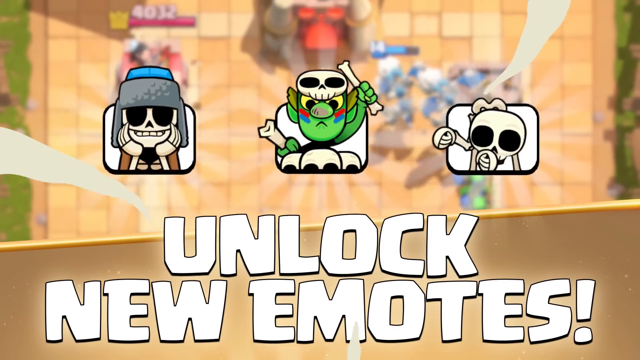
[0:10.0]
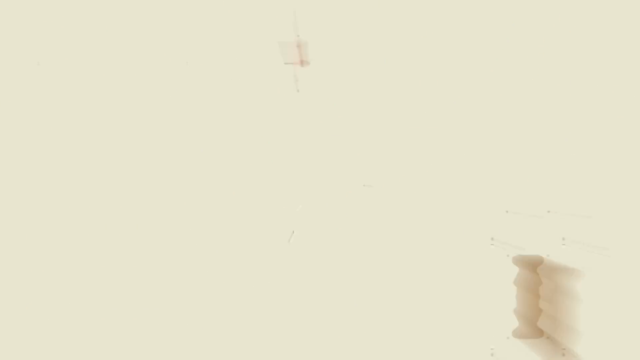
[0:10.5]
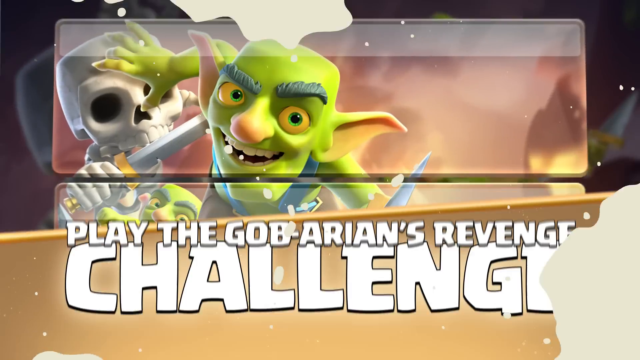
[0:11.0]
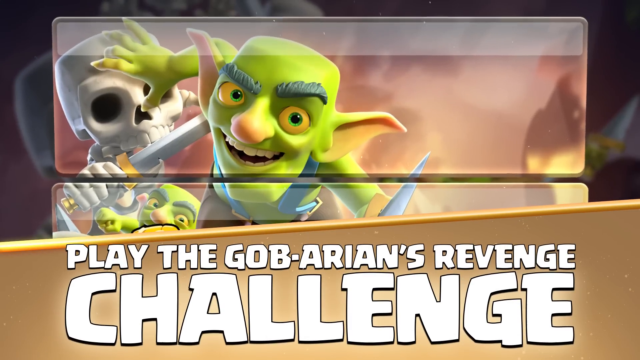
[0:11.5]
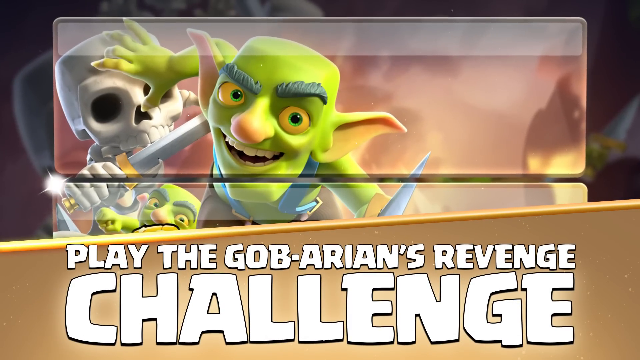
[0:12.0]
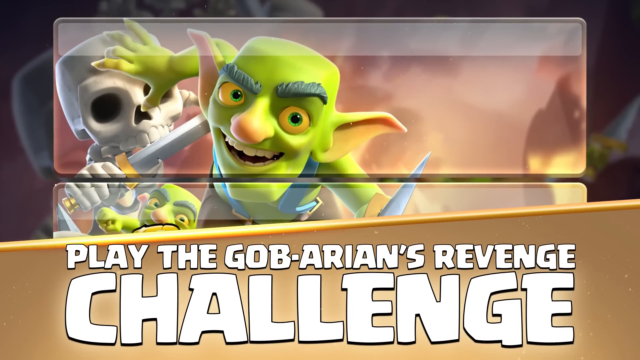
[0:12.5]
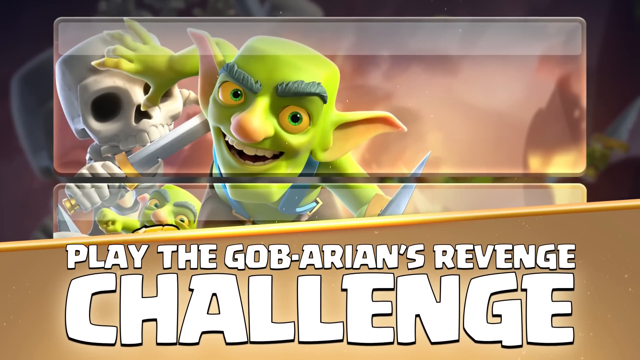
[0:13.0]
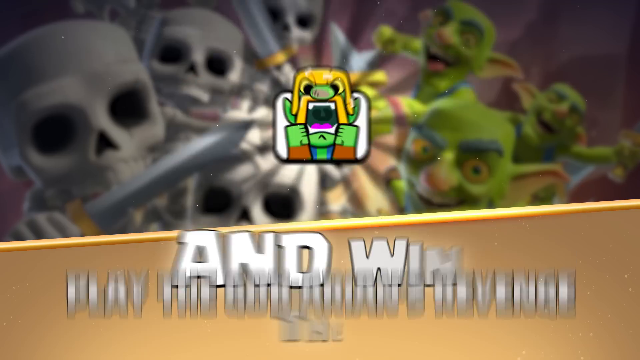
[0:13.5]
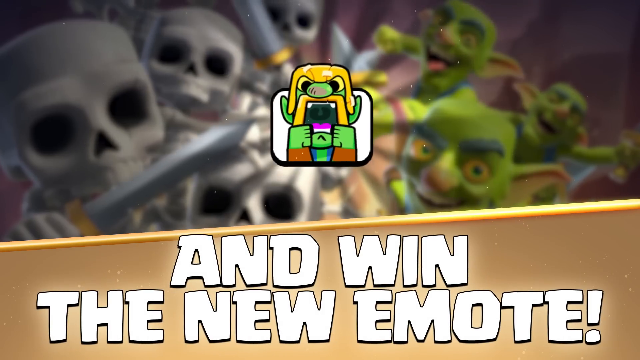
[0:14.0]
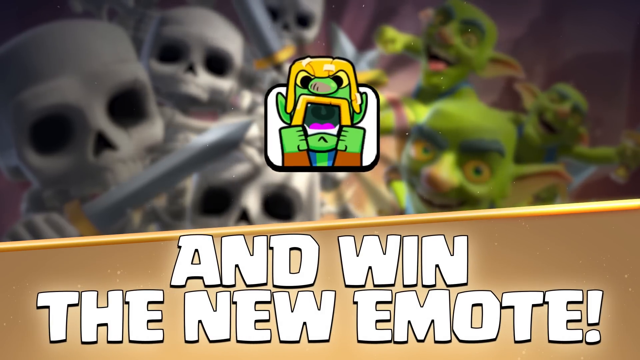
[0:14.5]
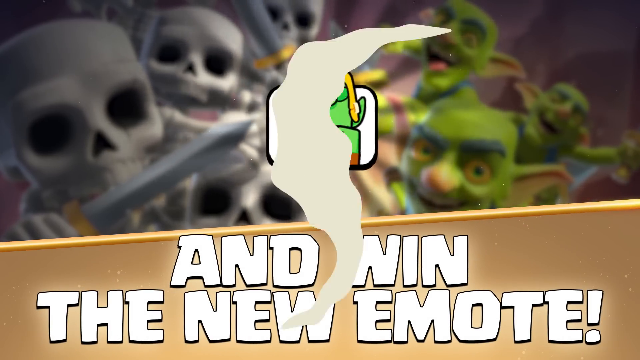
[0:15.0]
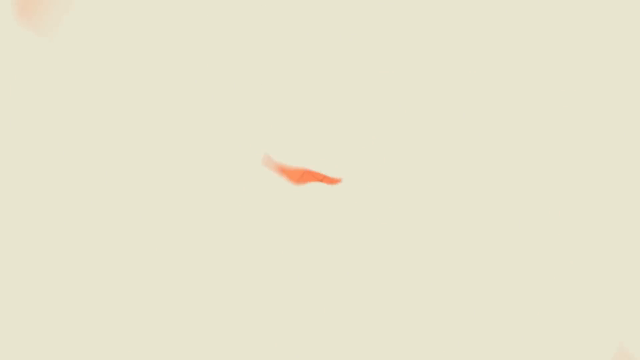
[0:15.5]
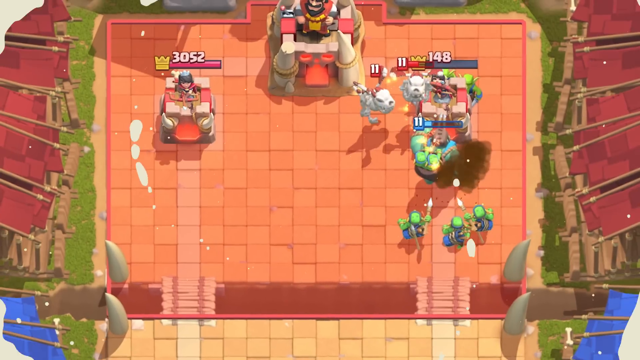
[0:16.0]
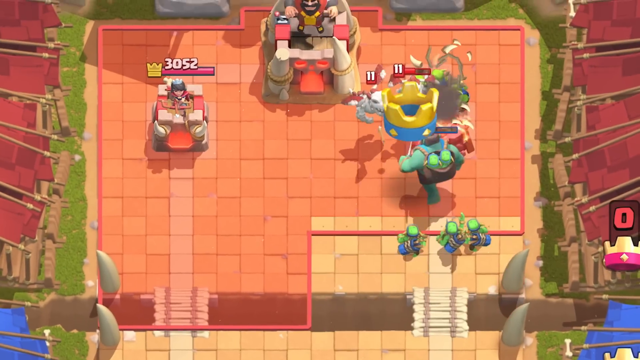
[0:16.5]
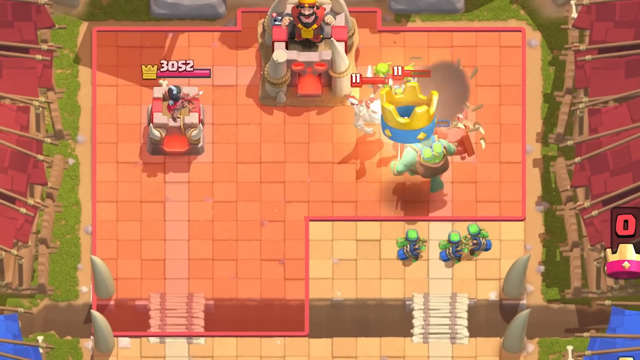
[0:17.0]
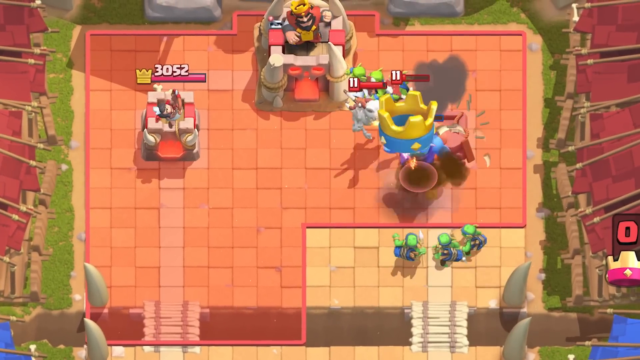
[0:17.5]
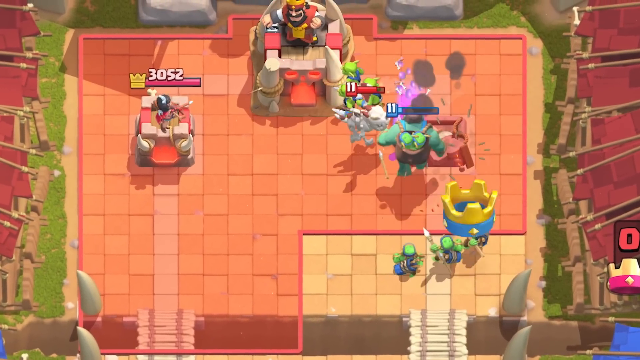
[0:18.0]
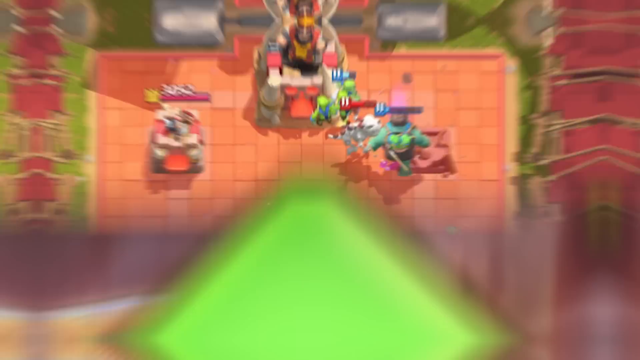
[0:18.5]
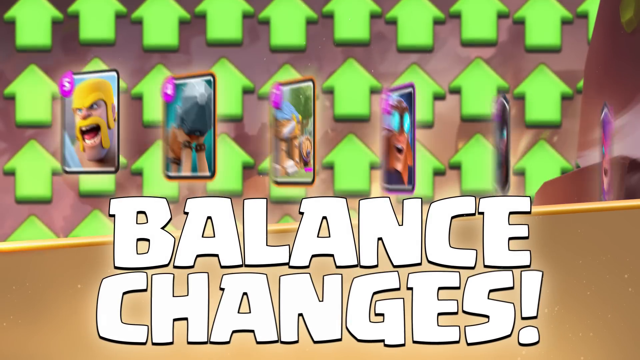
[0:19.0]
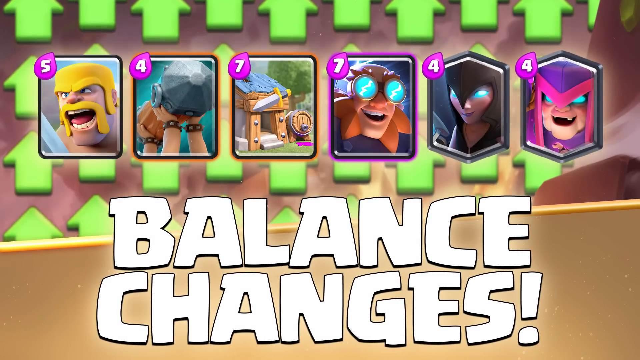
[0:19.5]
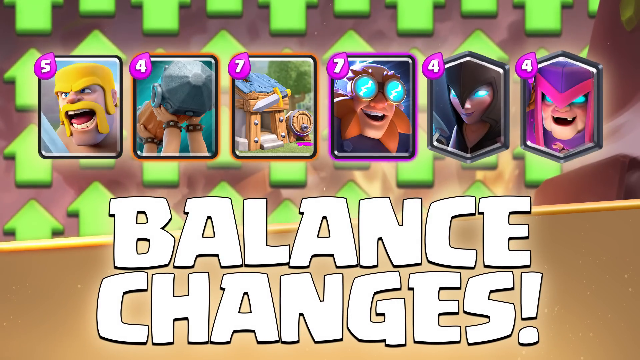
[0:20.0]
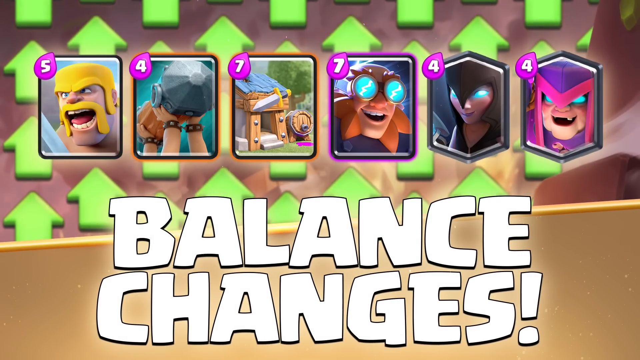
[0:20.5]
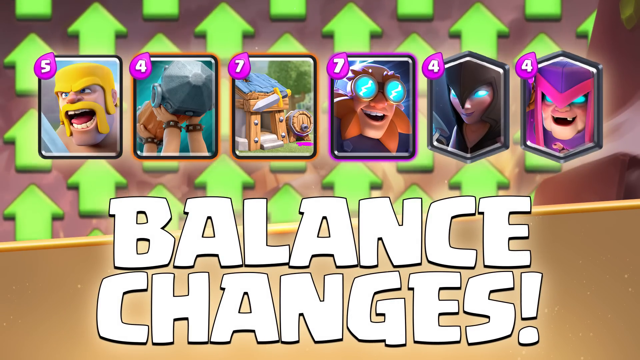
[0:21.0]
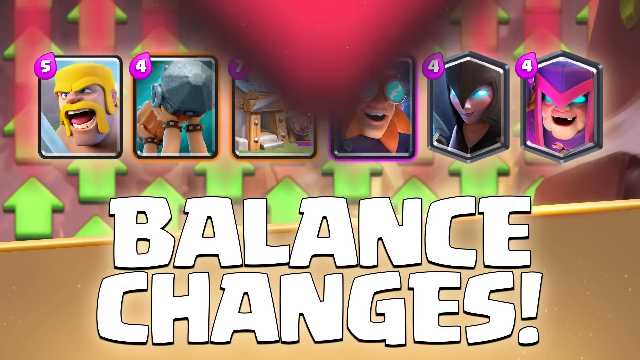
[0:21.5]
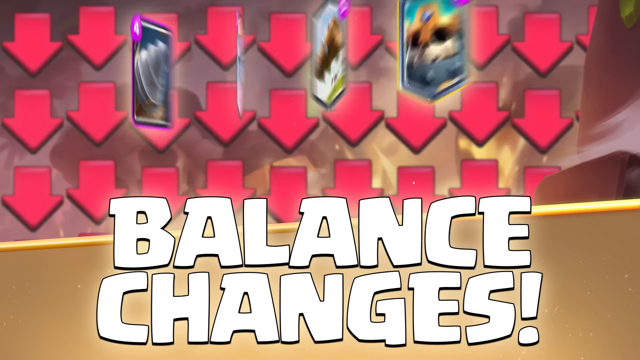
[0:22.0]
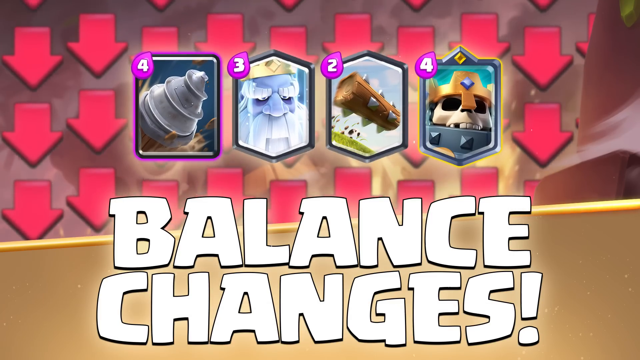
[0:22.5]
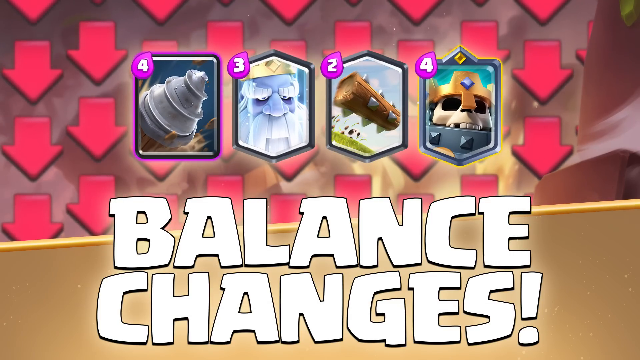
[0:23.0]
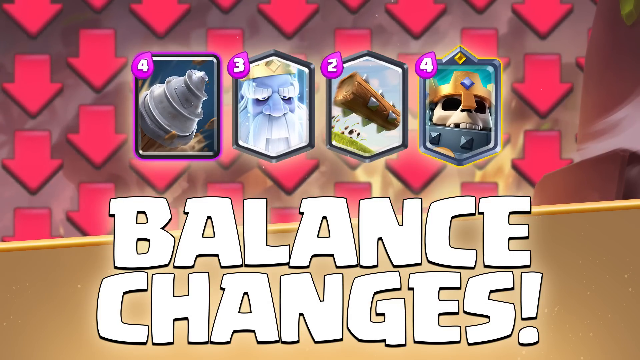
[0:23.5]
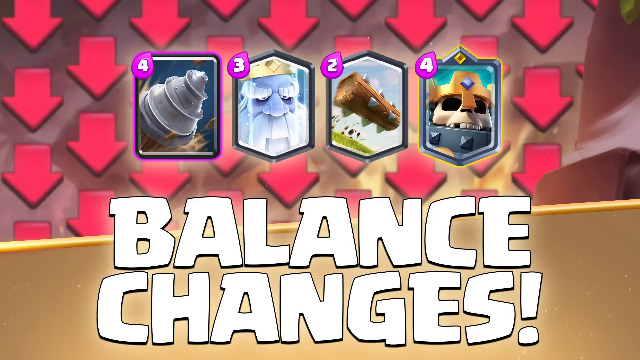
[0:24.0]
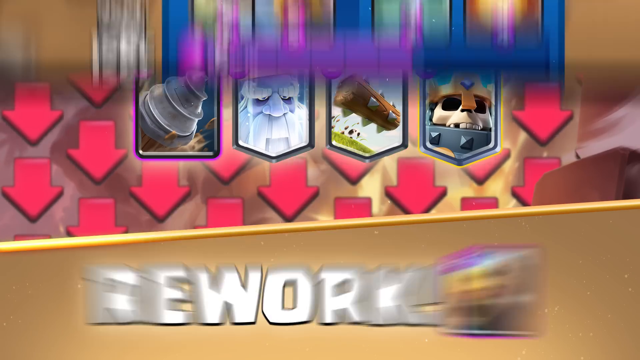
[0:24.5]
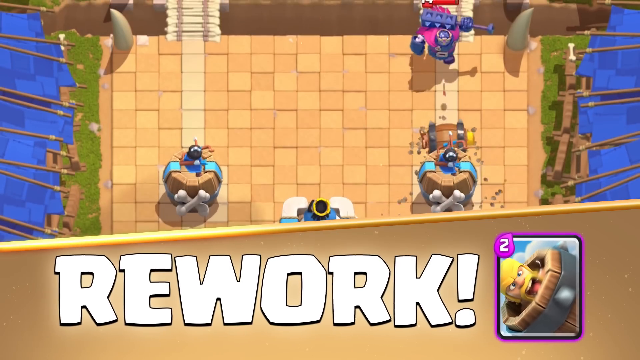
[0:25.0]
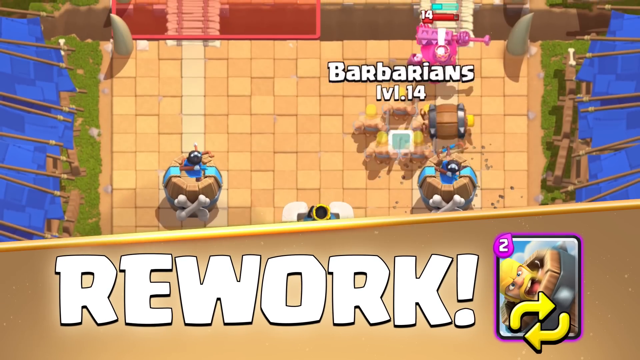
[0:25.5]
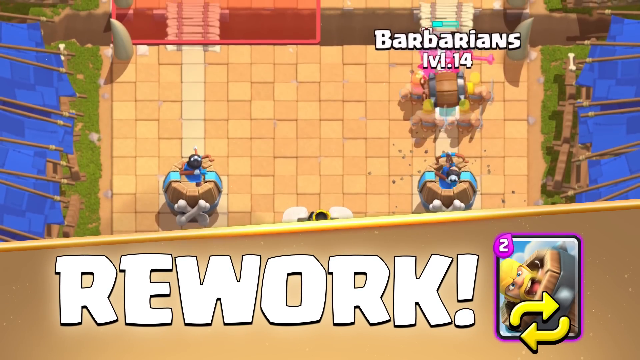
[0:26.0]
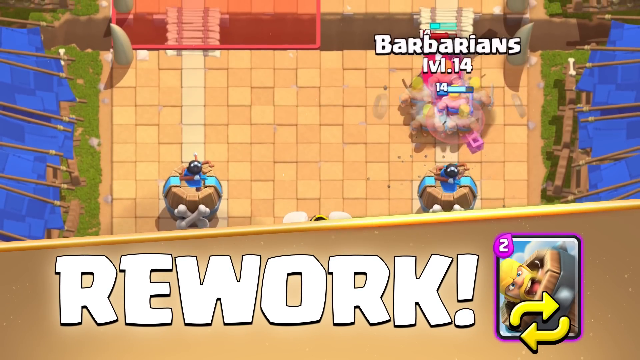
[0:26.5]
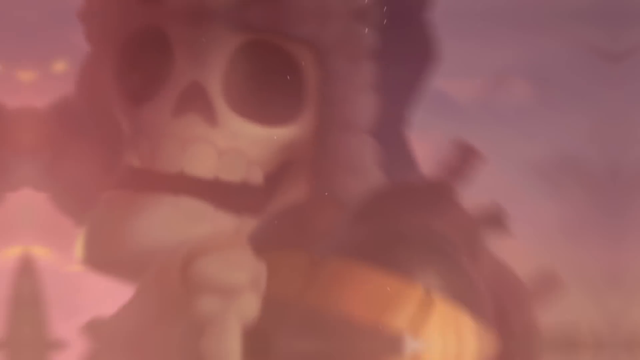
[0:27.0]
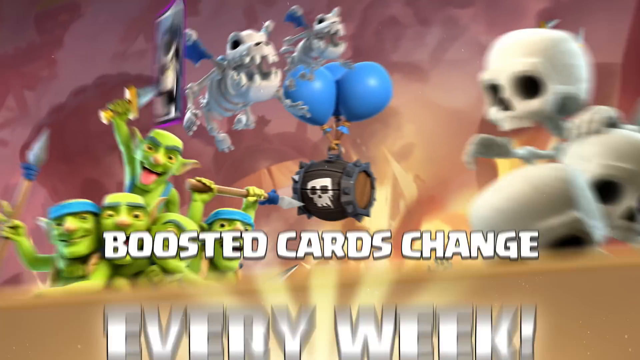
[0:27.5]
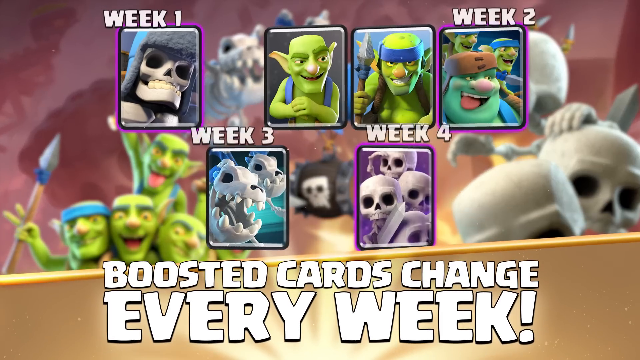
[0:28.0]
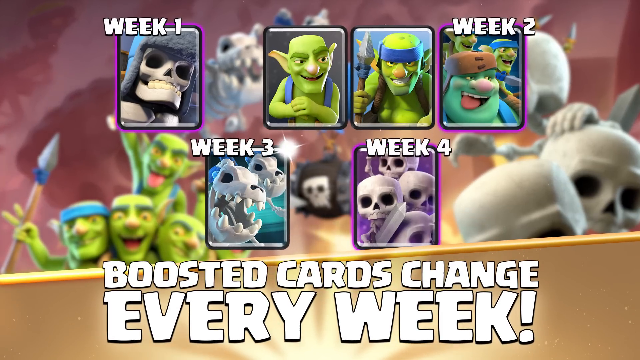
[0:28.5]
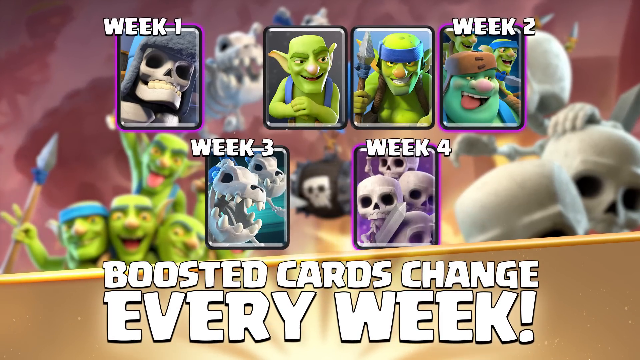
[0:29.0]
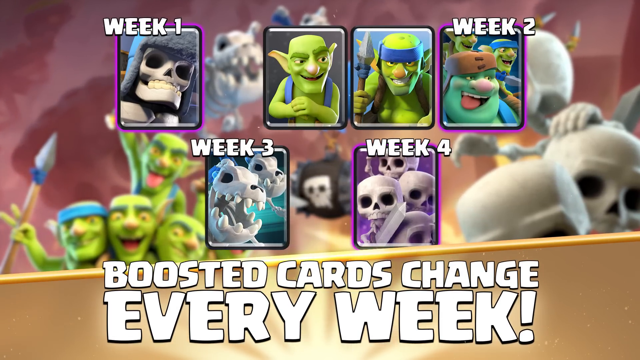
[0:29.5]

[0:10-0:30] An advertisement for a Clash of Clans game shows that a themed release is taking place. The advertisement states that playing a specific area in game mode gives a chance to win a new emote, and the emote appears on screen as the advertisement flashes. A transition leads to a live look at the game in action: three different character models are organized at specific points of a map, and smaller characters attack these larger bosses with projectile weapons. The video then transitions to another upcoming game change. Six different character models appear at the top of the screen with a large label underneath stating that balance changes are coming. Some characters are being nerfed and others buffed, indicated by green arrows pointing at the buffed champions and red arrows pointing at the nerfed champions.